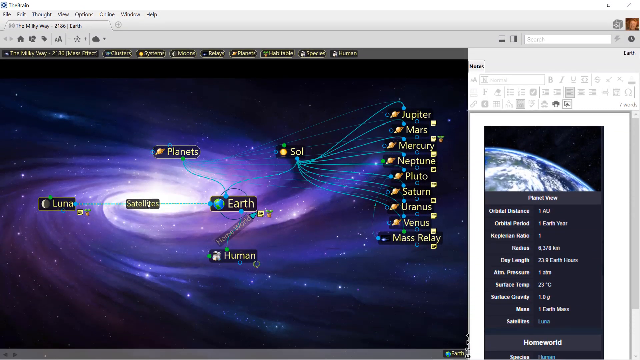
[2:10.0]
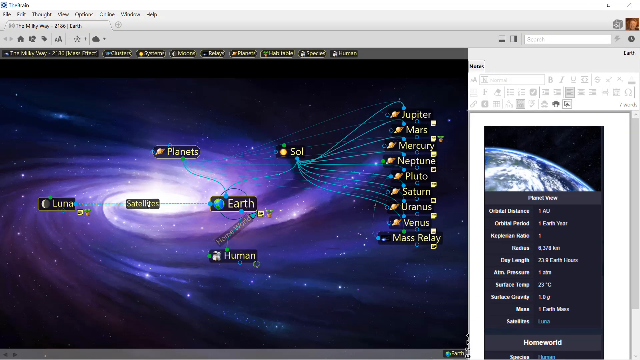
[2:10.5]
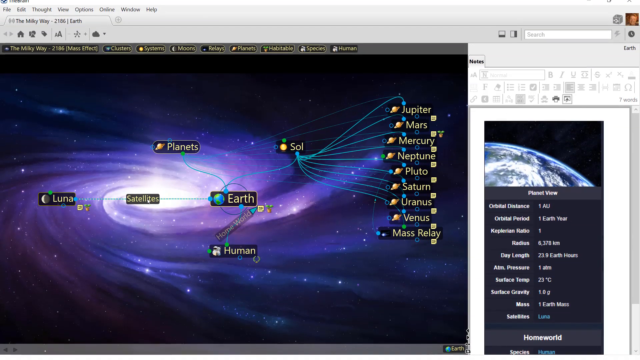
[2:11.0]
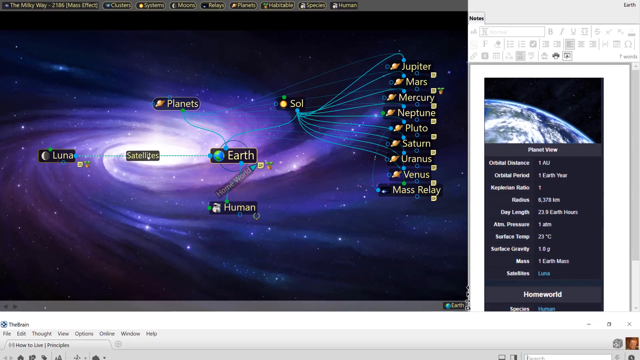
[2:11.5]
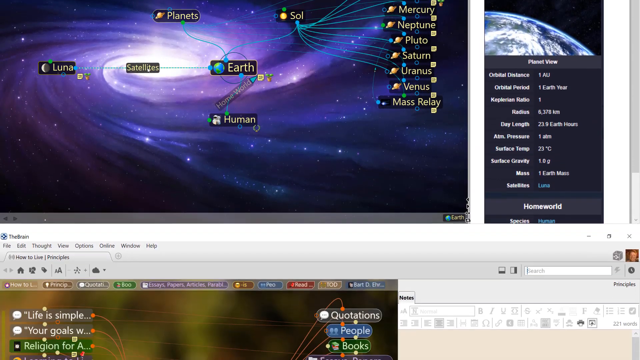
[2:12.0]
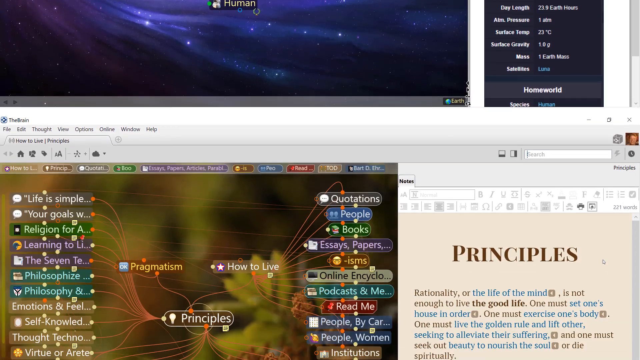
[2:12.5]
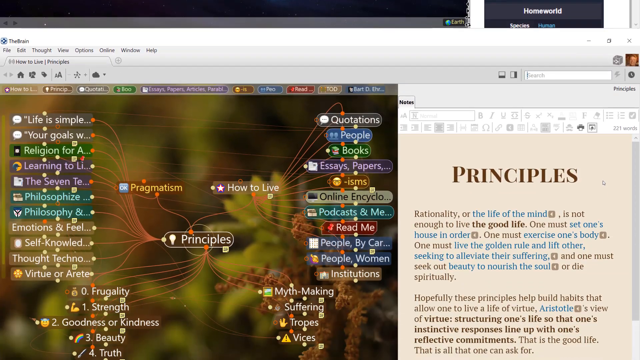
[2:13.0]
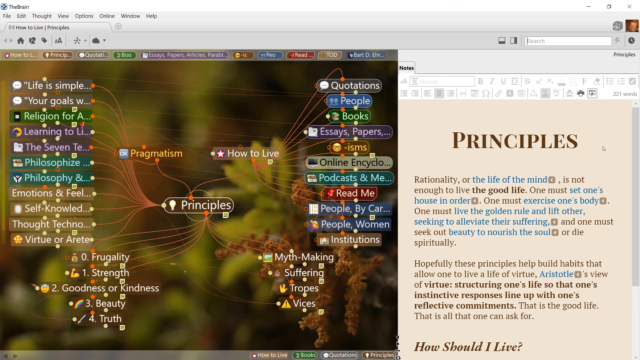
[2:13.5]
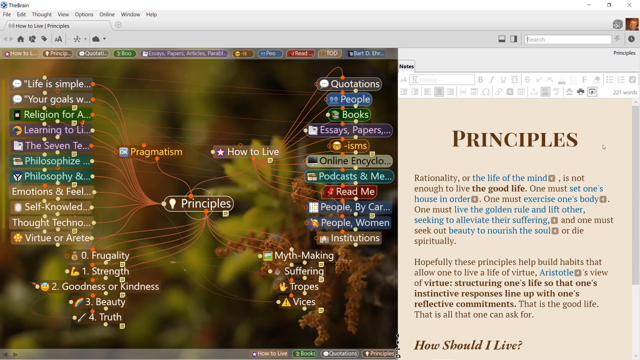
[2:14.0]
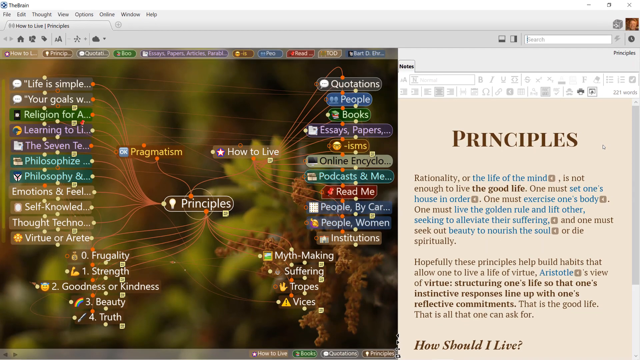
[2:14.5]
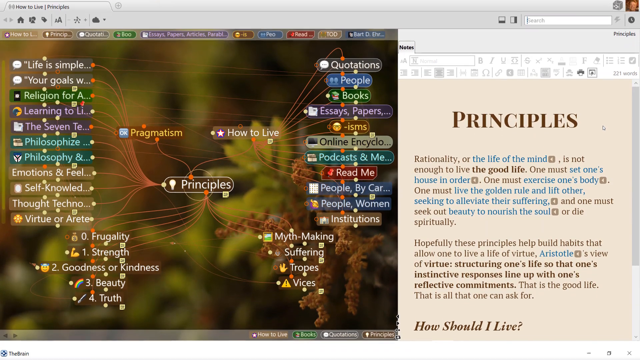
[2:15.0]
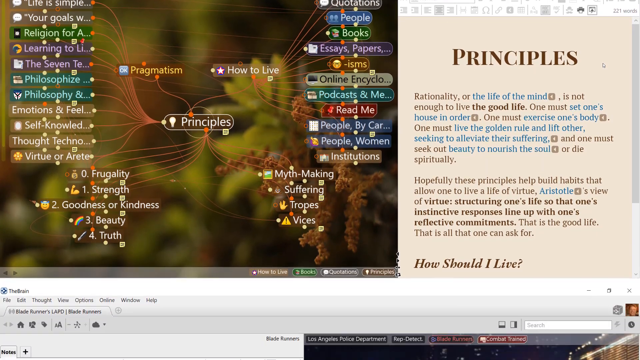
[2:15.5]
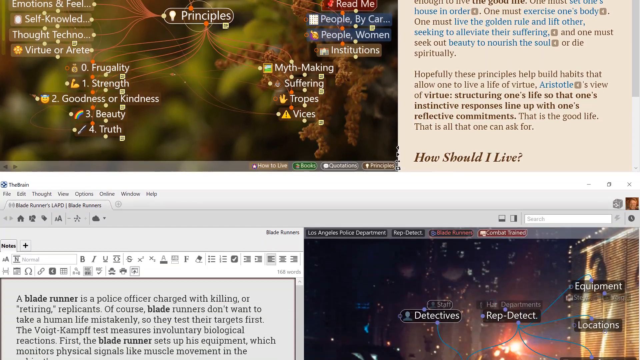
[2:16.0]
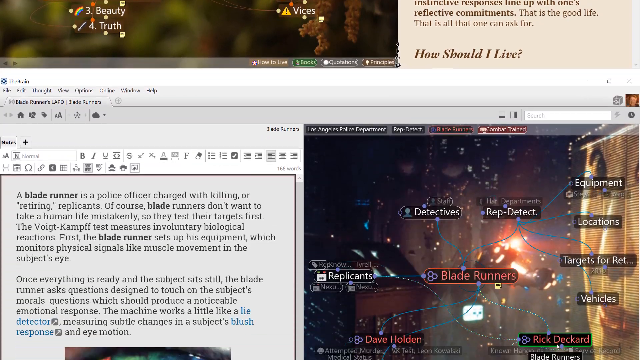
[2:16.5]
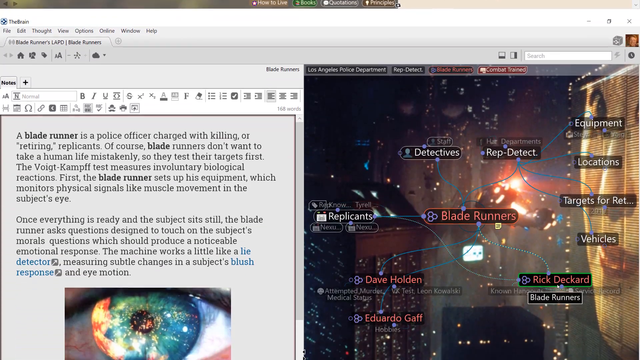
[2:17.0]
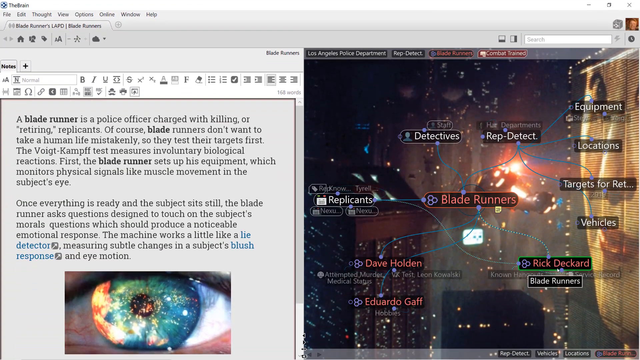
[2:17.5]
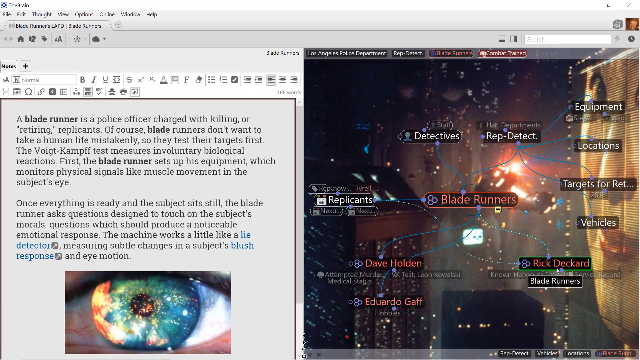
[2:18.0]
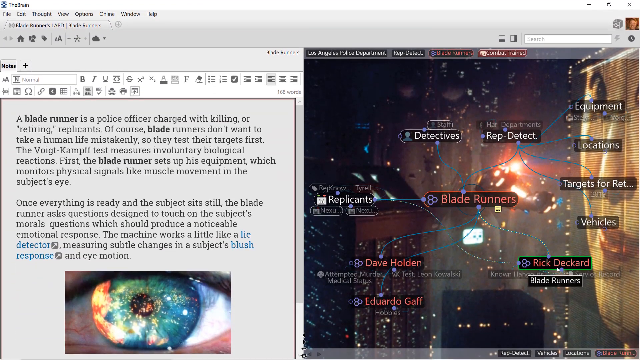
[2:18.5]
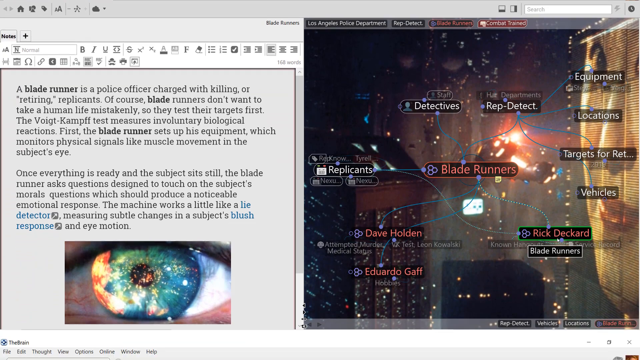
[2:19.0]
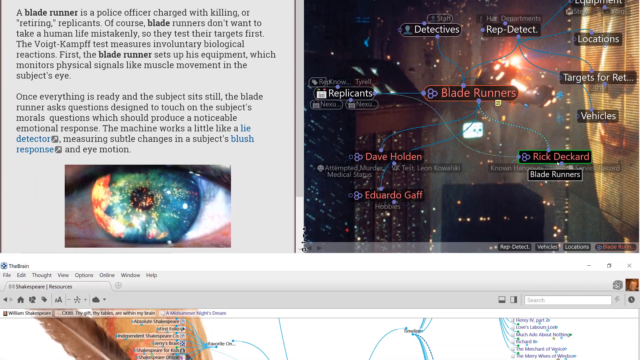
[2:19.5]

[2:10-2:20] A picture of the Milky Way with a bunch of constellations and stars is on screen. In the middle is Earth, with a little blue and green sphere to the left of it and a human underneath it. Diagonally to the top right is "Sol", and stacked all the way to the right are the other planets, with "mass relay" underneath Venus. This is in the brain, with a "Milky Way" tab. Notes on the right show a planet view with various information such as the length, air pressure and surface temperature. The view scrolls down to "pragmatism" and "principles", with a bunch of different philosophies and religions on the left and "principles" in the middle in an oval bubble with a bunch of curved arrows coming from it, in about four different sets. On the right is a split screen for principles as well. Scrolling further down, Blade Runner appears, with a graphic organizer of replicants, detectives and the different parts of the story.